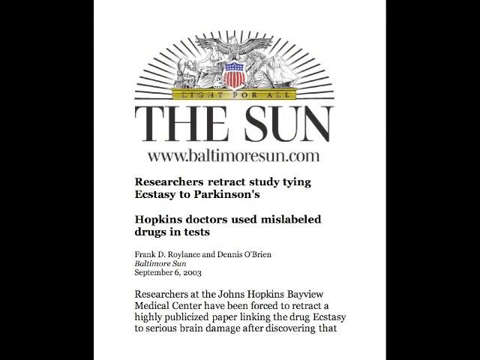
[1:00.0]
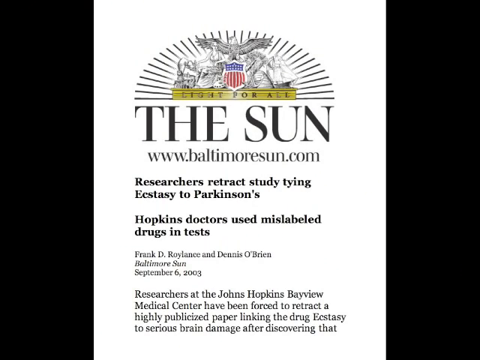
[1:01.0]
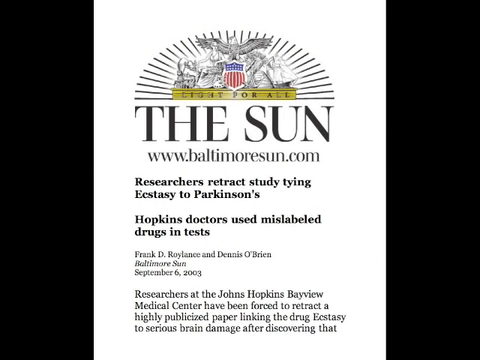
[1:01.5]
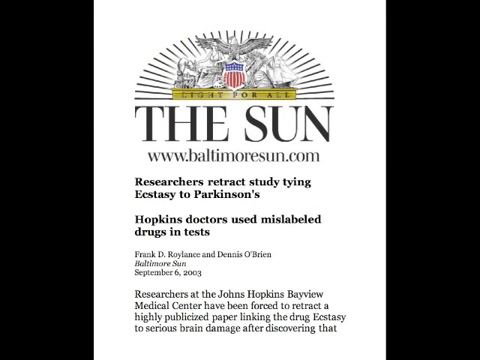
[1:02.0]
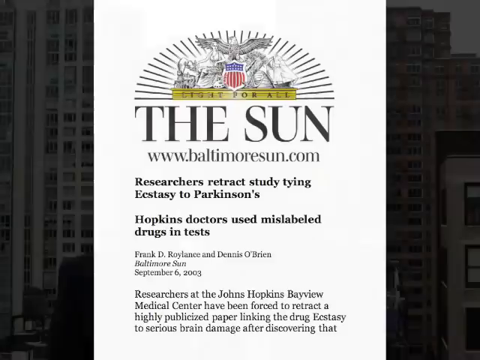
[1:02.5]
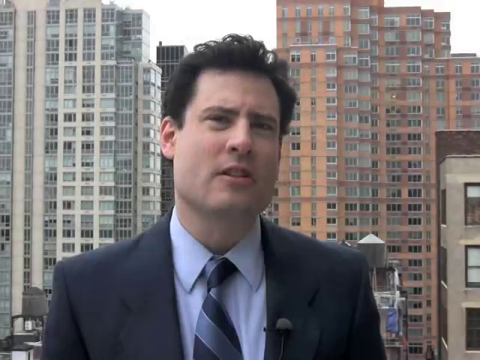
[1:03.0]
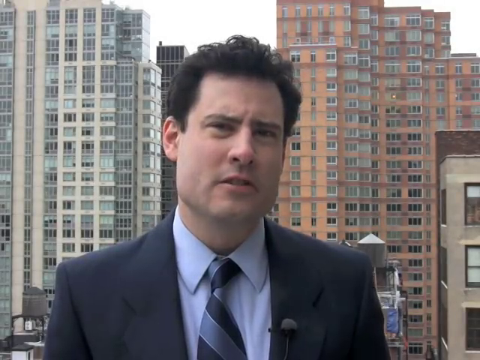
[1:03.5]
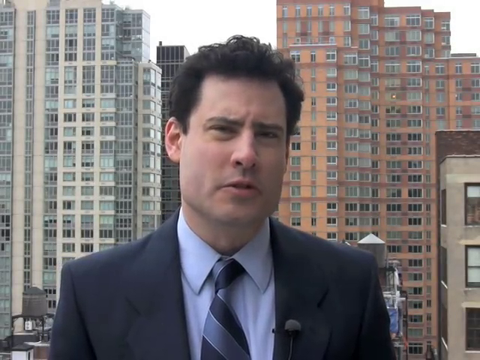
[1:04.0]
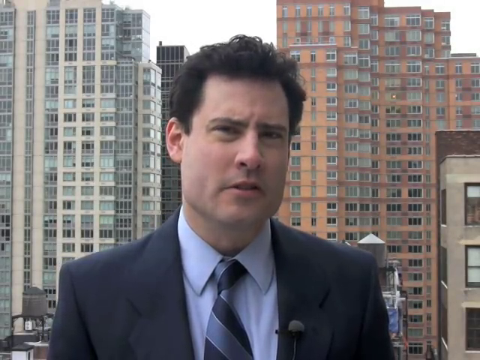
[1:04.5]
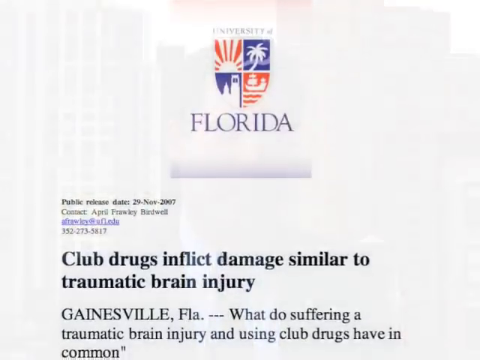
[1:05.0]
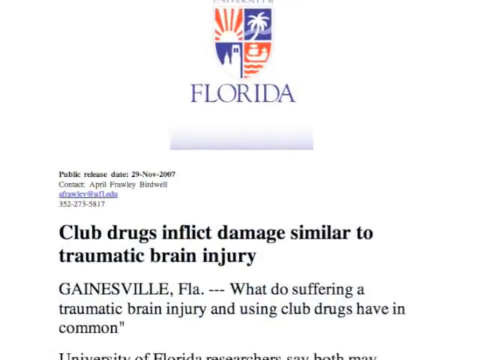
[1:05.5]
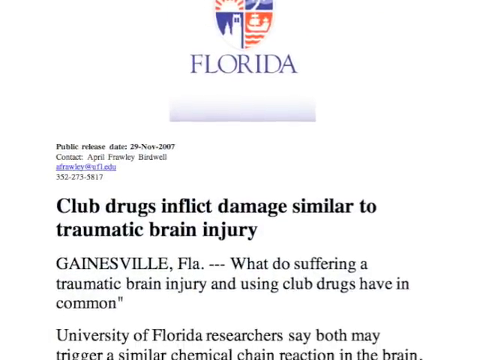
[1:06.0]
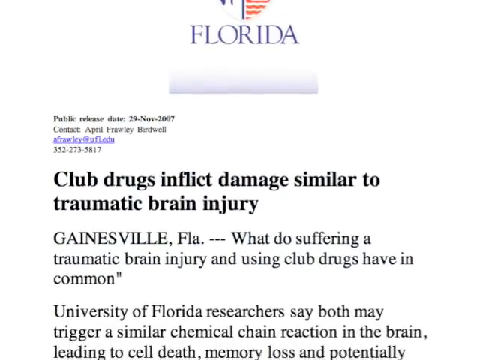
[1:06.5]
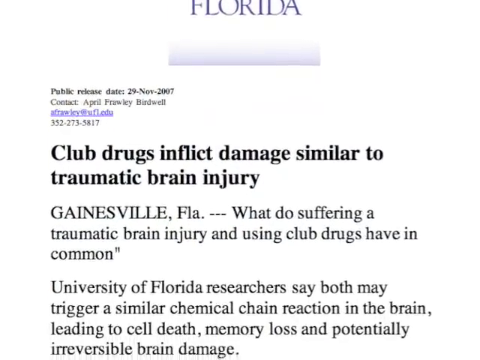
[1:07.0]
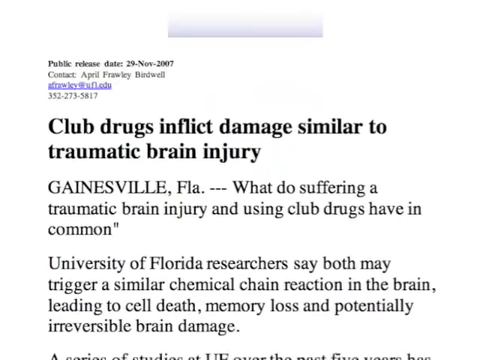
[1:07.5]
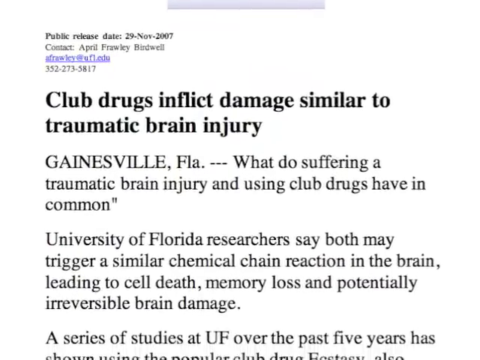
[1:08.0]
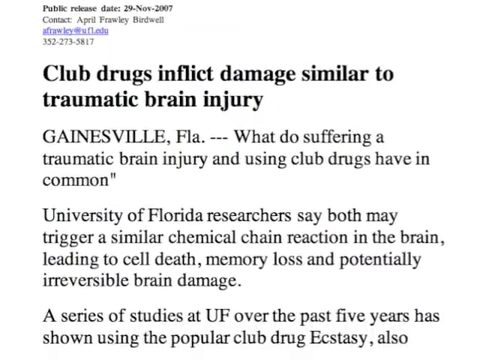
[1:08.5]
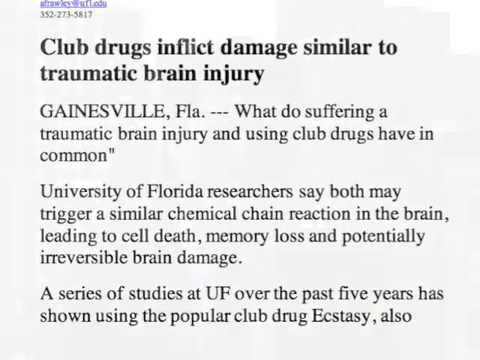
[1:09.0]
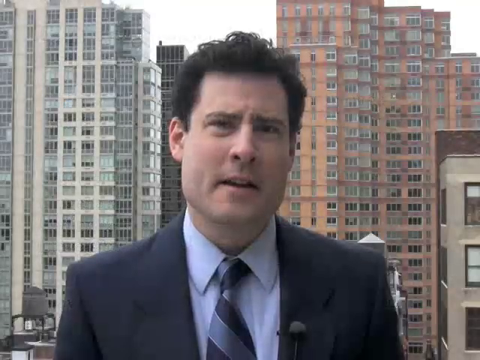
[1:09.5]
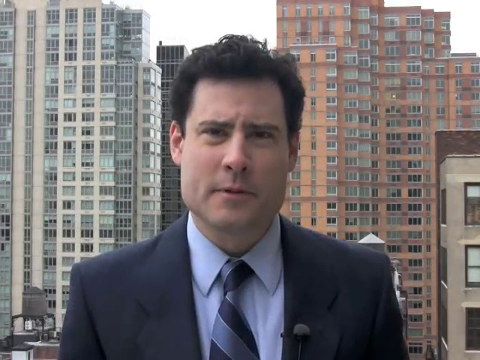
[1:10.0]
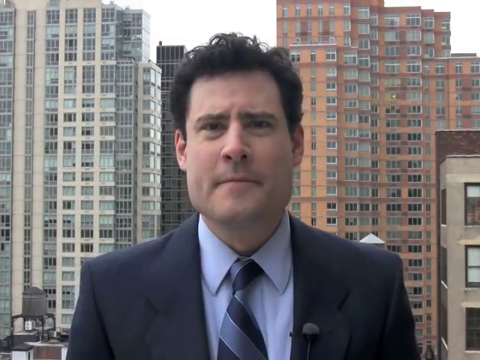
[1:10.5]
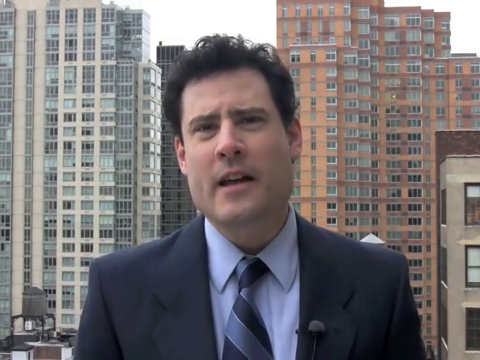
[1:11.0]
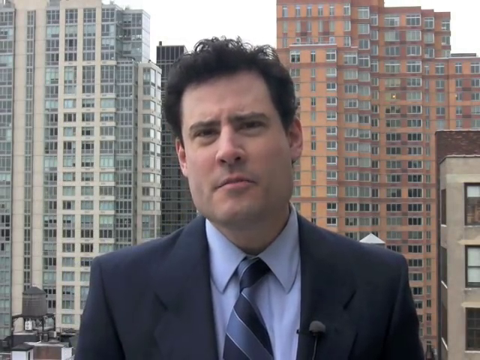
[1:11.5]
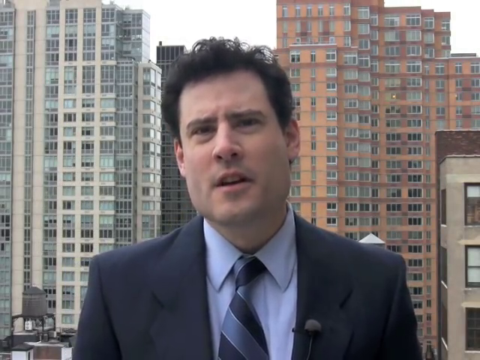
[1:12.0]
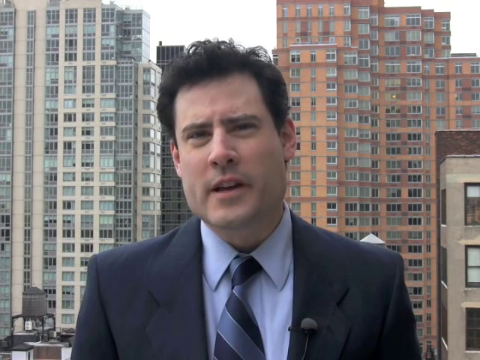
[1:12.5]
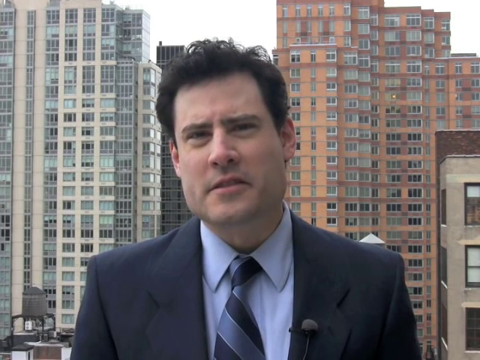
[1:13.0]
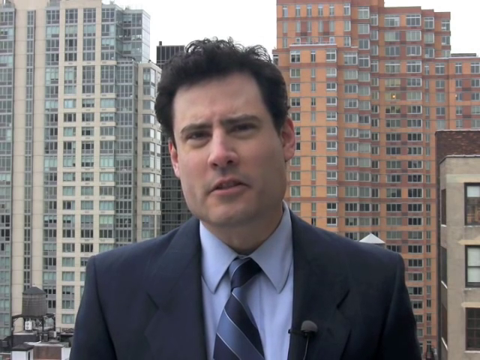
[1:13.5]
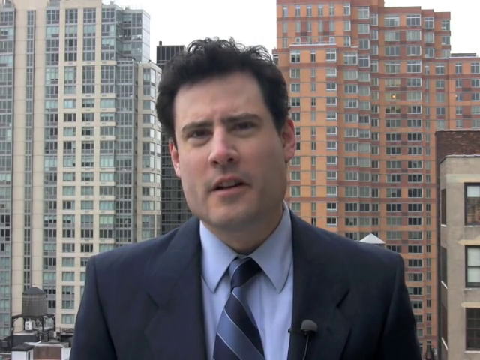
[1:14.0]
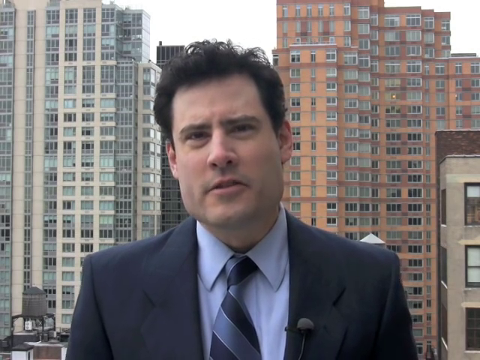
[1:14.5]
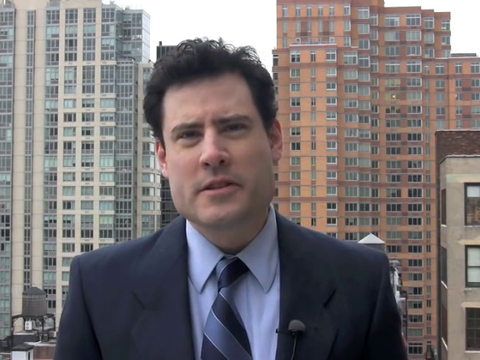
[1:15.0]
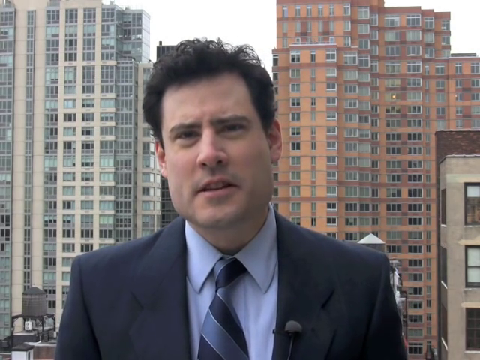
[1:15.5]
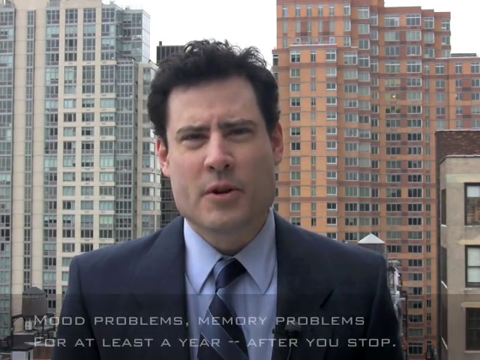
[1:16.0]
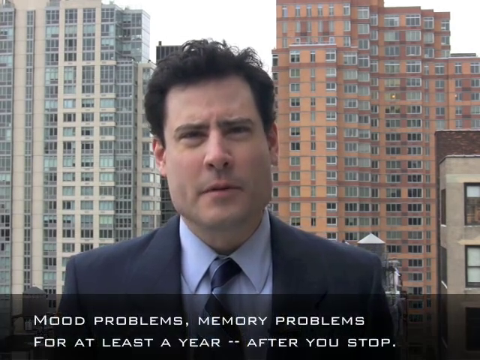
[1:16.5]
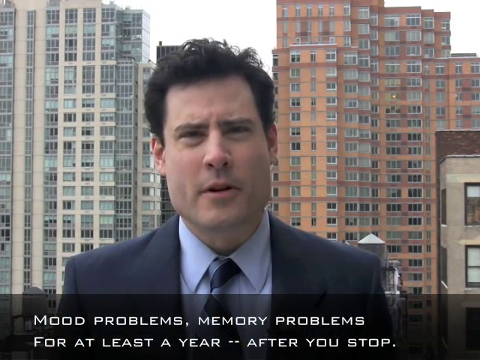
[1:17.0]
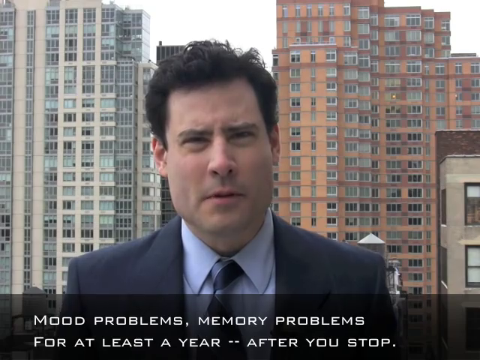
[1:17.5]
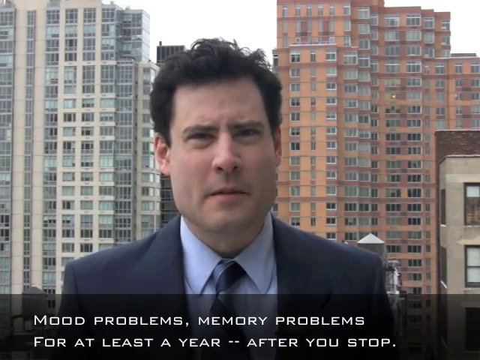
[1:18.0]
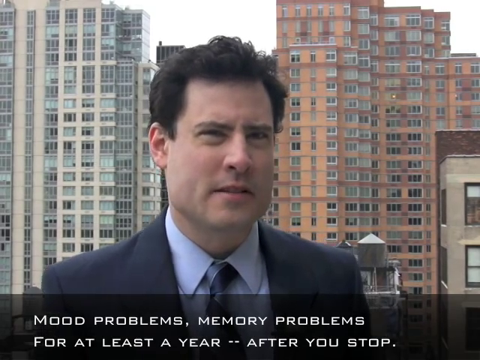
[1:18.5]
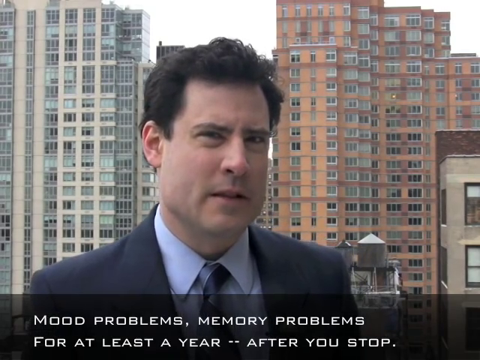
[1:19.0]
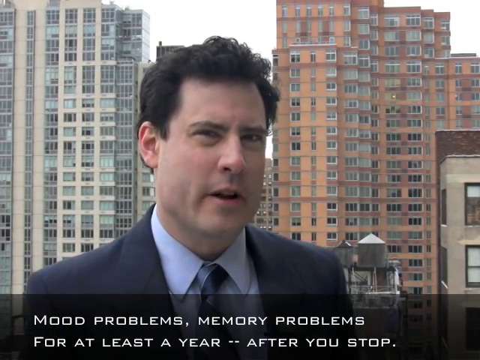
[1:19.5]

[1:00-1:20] In the center of a solid black background is a white image filled with information and text. At the top is an illustration of an eagle set against a medallion displaying the colors of the United States flag: blue with white stars on top and red and white stripes below. Below the medallion, an orange or amber banner reads "light for all". Beneath that, in large, bold black text, it reads "The Sun", followed by "www.baltimoresun.com" and the text "researchers retract study tying ecstasy to Parkinson's. Hopkins doctors use mislabeled drugs and tests". It is dated September 6, 2003. Then the man who is speaking with the young woman appears, looking rather intense. He is fair-skinned with a strong jaw, dressed professionally, in front of a glass window in an urban setting with high-rises behind him. Another article comes up and scrolls very quickly.